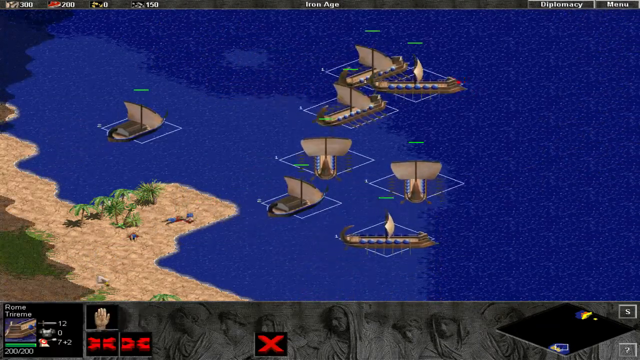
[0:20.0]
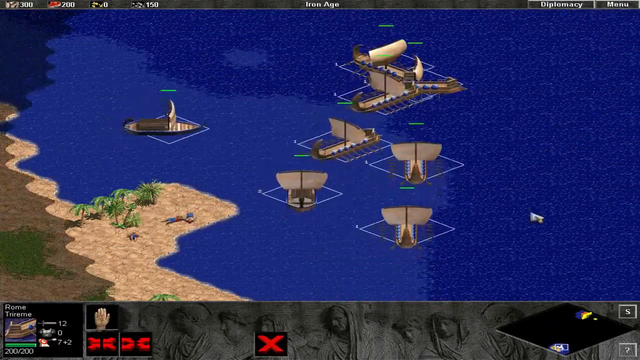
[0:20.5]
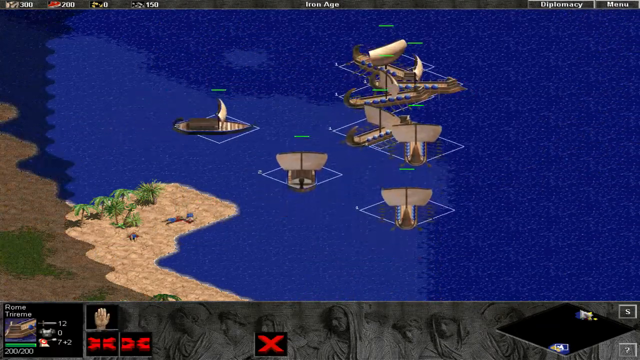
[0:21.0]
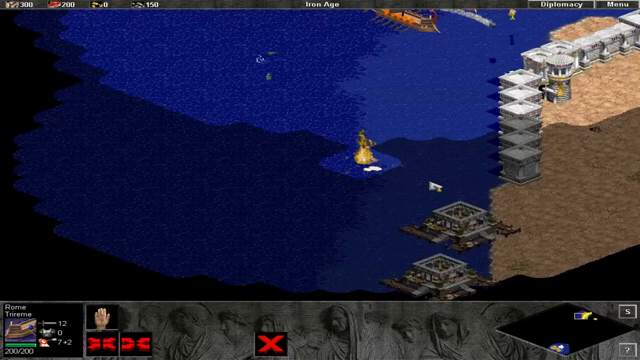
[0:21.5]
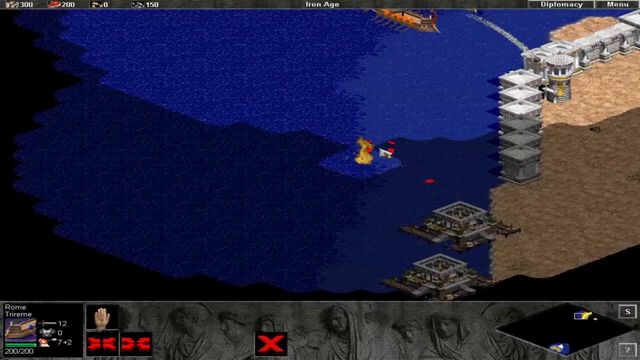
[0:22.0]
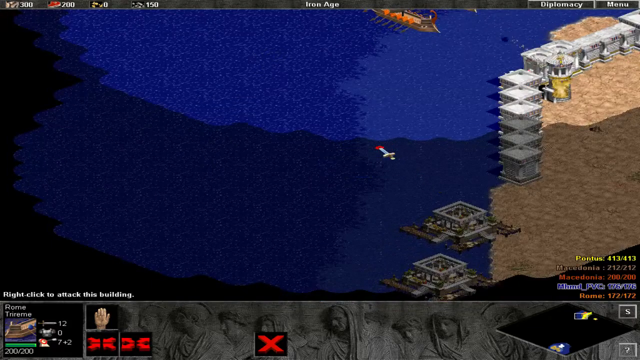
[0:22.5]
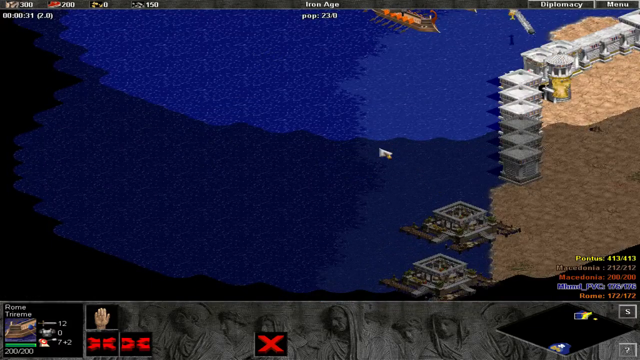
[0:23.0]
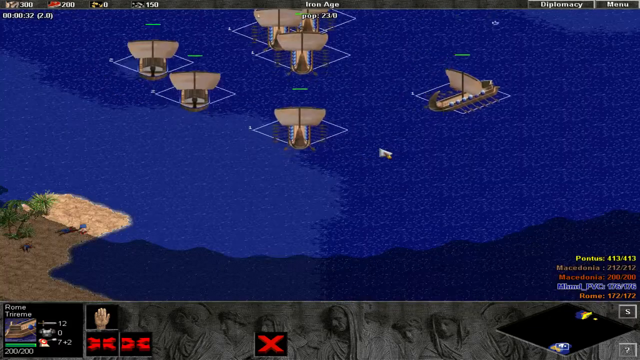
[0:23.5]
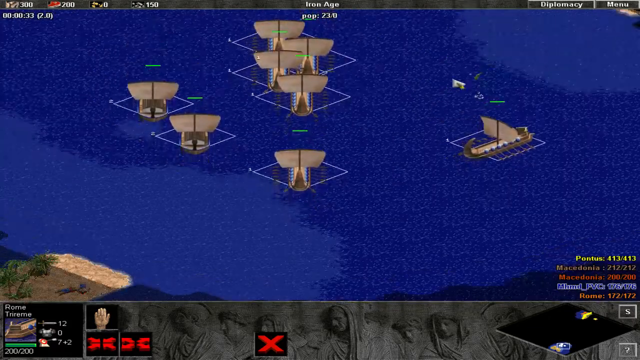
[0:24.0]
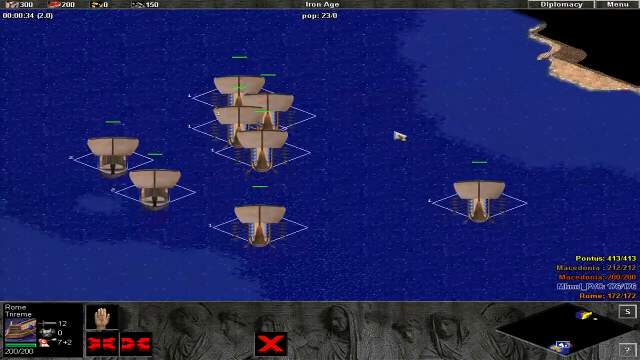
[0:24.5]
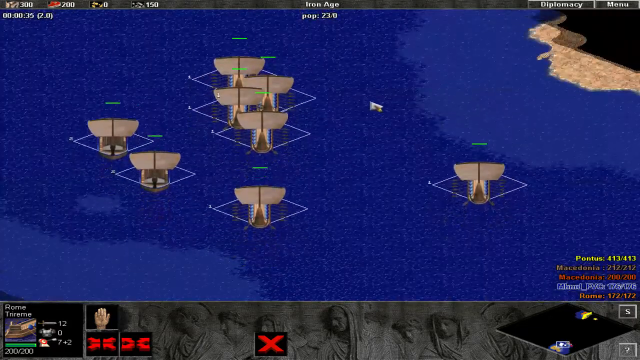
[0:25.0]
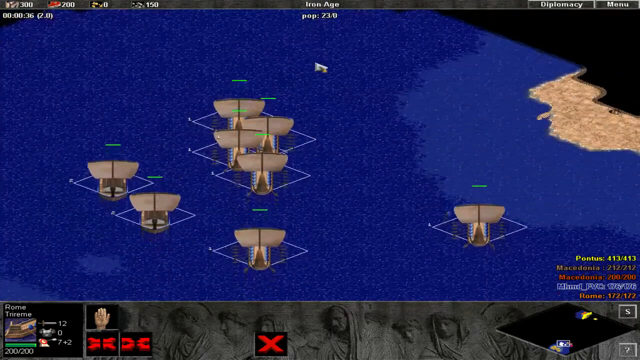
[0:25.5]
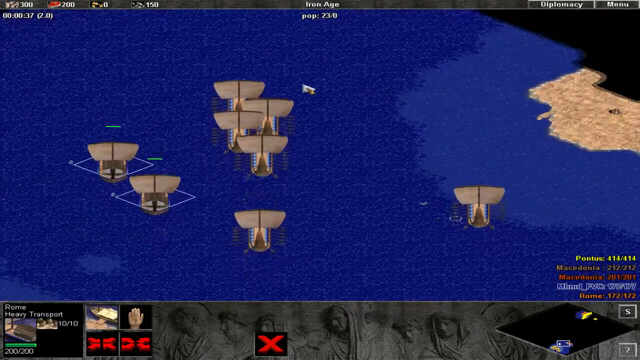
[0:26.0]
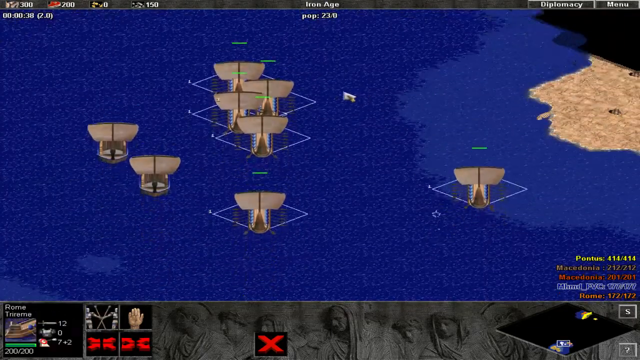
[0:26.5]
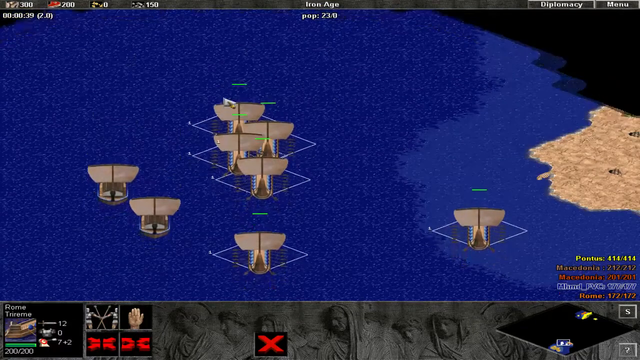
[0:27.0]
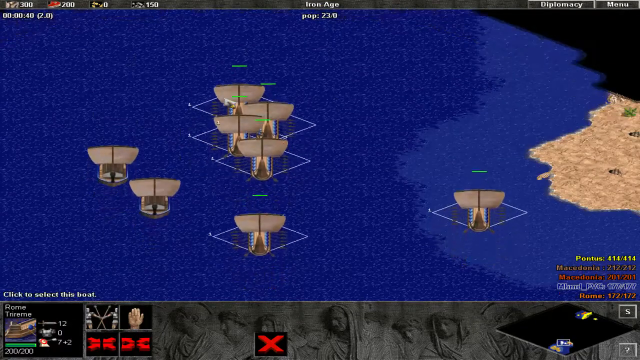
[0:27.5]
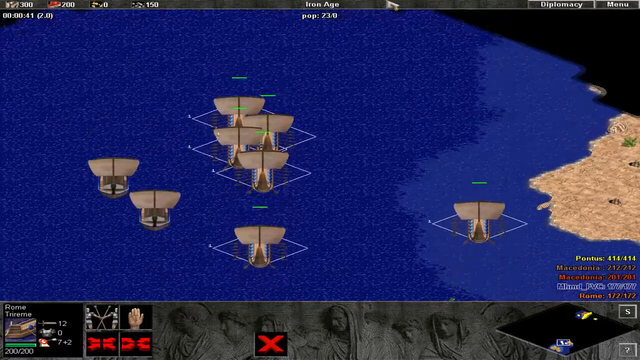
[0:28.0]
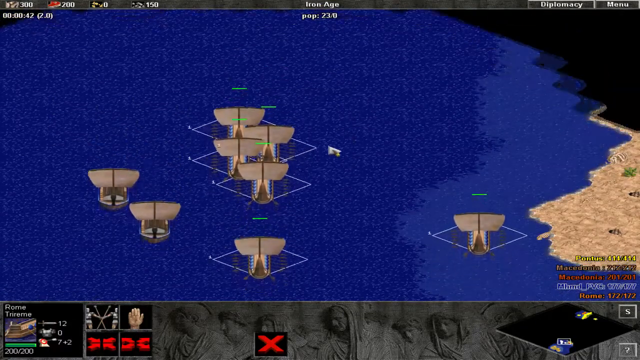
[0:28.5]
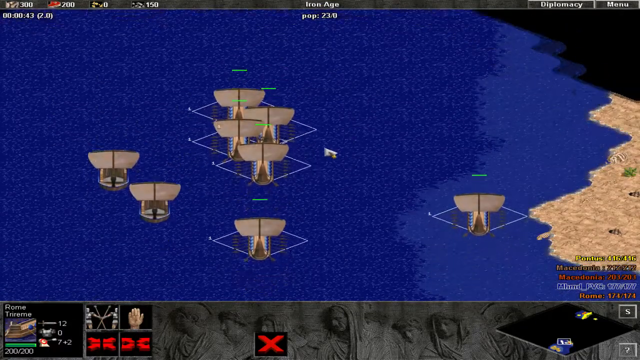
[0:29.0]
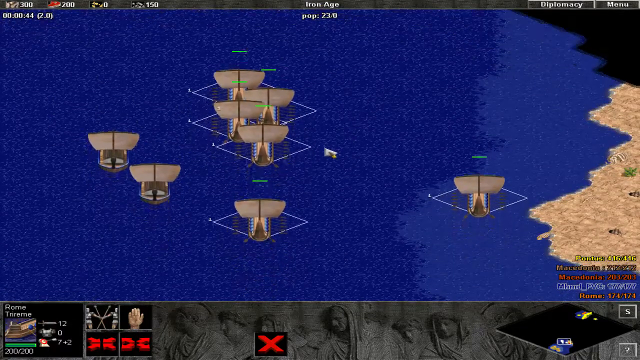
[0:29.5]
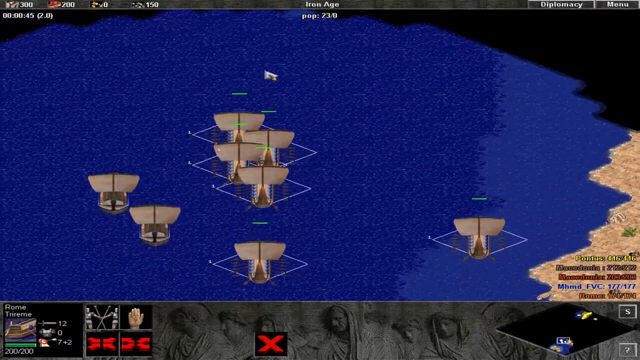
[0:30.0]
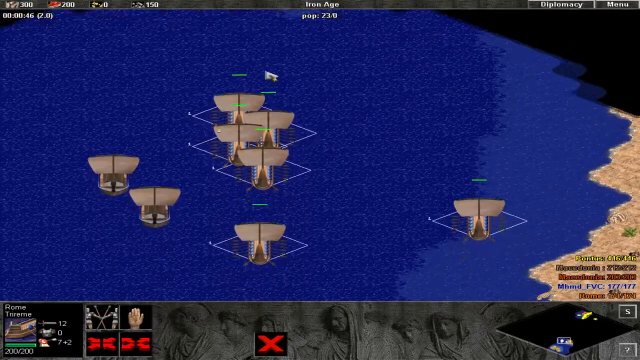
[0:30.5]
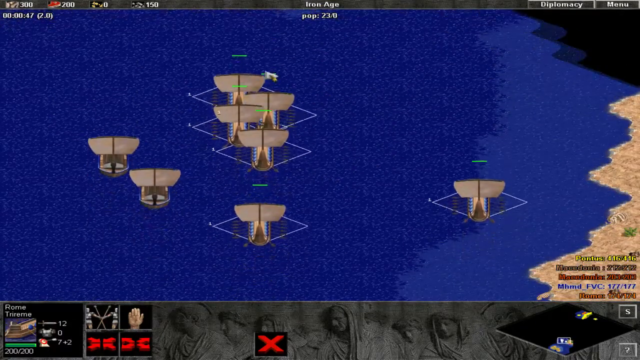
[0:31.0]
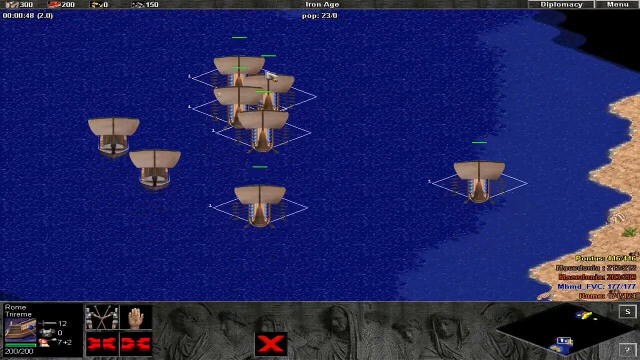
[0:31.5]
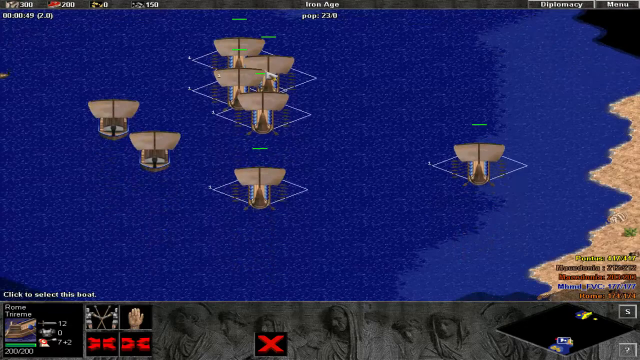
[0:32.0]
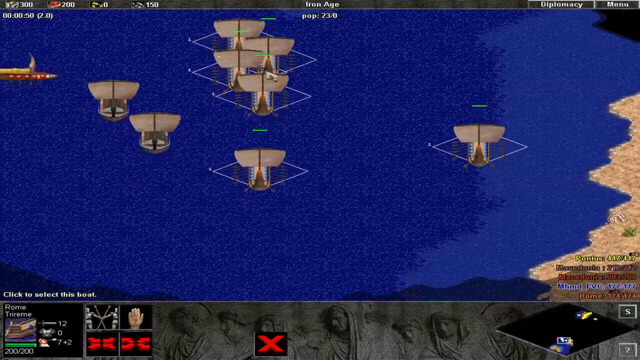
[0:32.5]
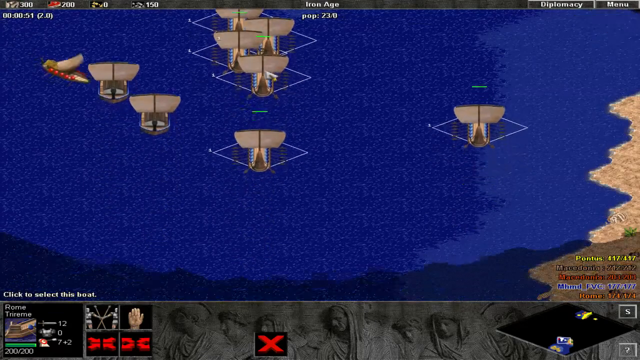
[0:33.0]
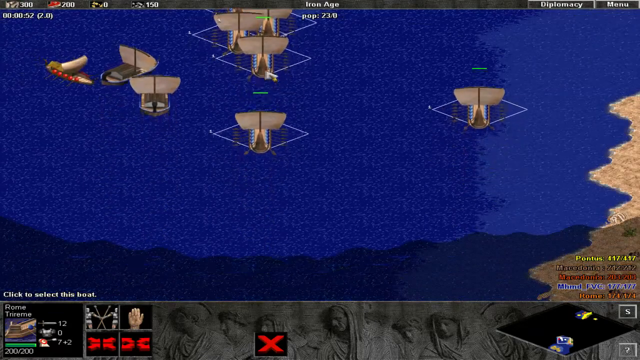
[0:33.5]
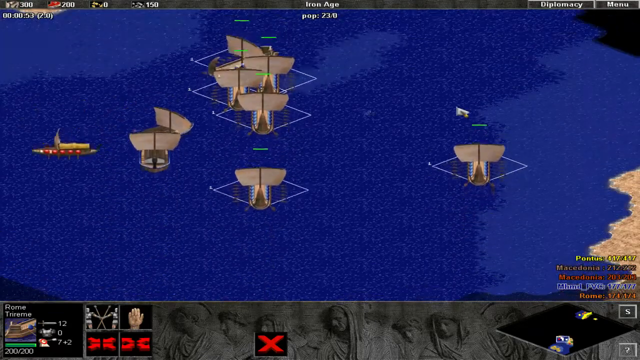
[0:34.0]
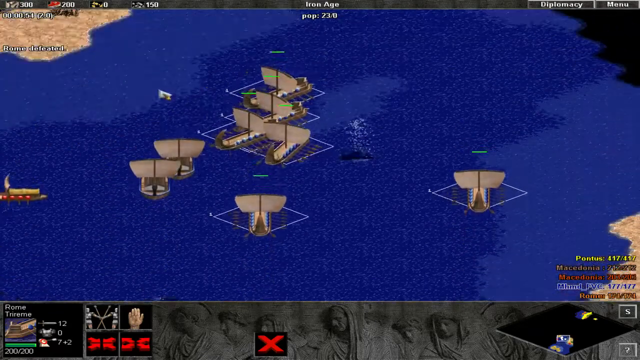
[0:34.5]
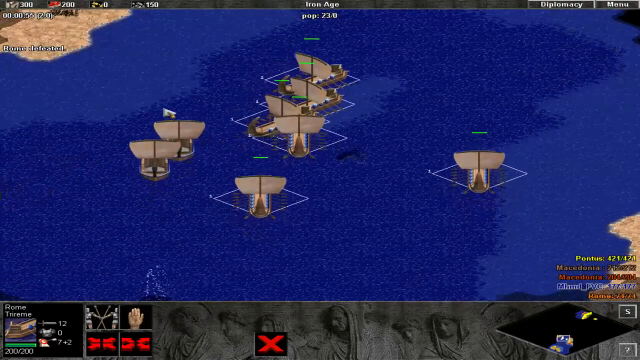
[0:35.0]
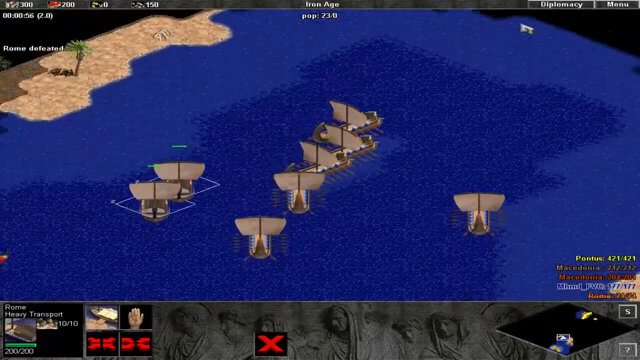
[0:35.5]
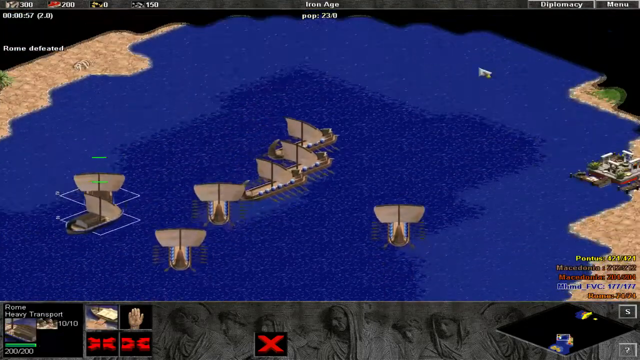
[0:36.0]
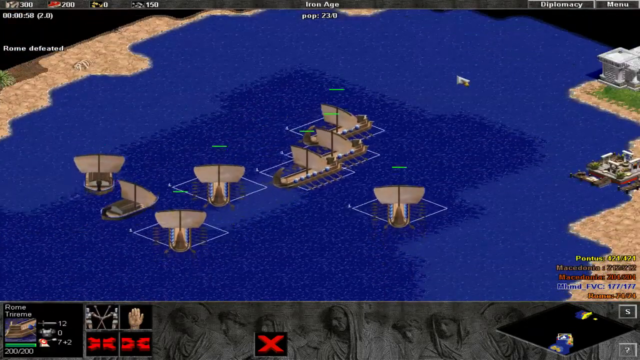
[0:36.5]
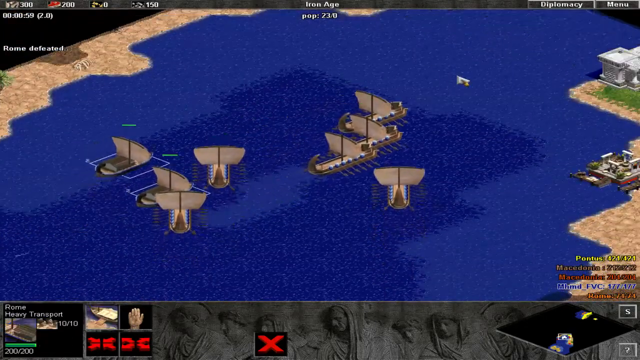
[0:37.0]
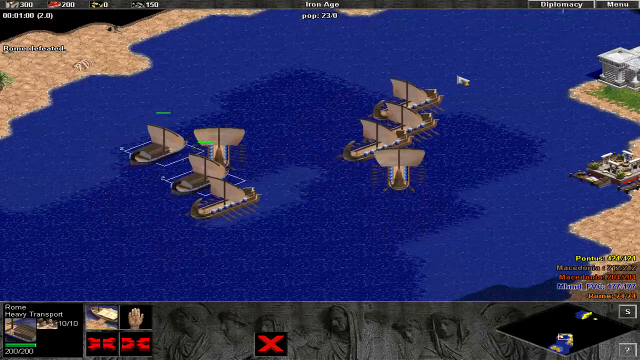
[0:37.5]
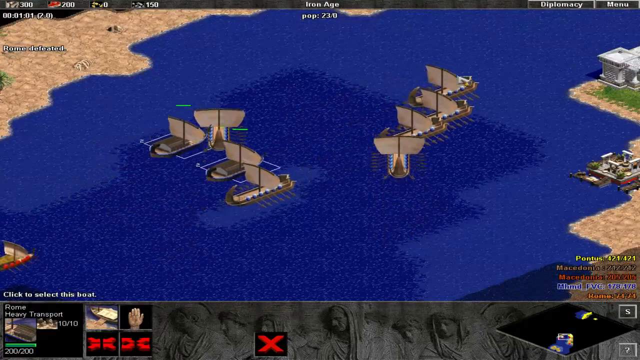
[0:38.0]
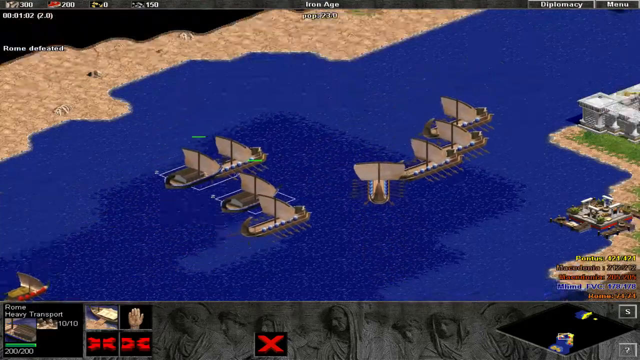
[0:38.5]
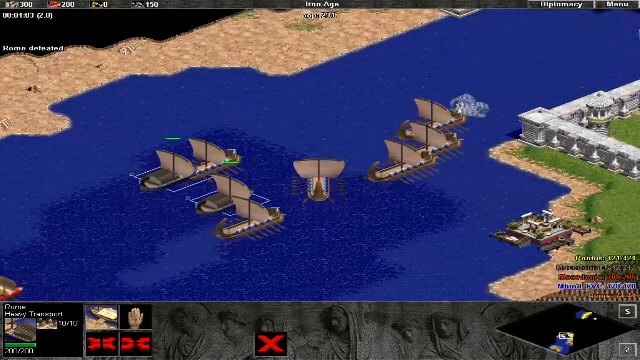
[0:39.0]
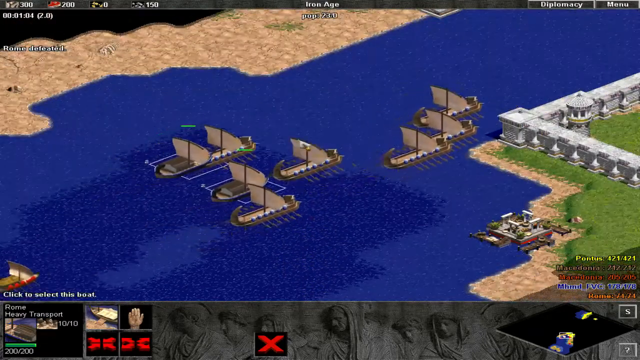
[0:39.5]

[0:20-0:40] The ships move into the ocean, then the view switches to what looks like a battle scene at what seems to be a coastal fort, where white square buildings are hit with missiles and fire. It cuts back to the ships, apparently heading north across a pixelated 3D map in an old-school video game style. The ancient-looking ships head north, and another ship comes out from the west and heads towards them. They then head up towards what looks like another city with something like a white wall on the outside. There appear to be eight ships, apparently about to launch an assault on the city with the white marble-looking walls.